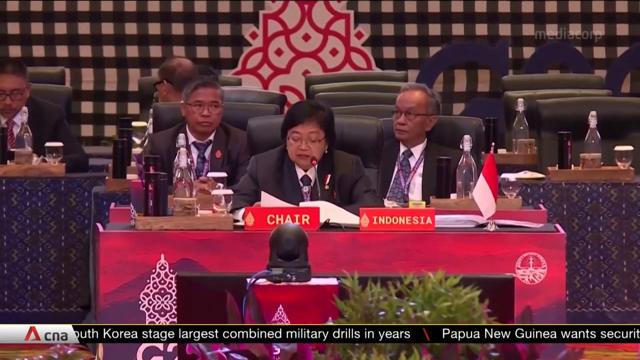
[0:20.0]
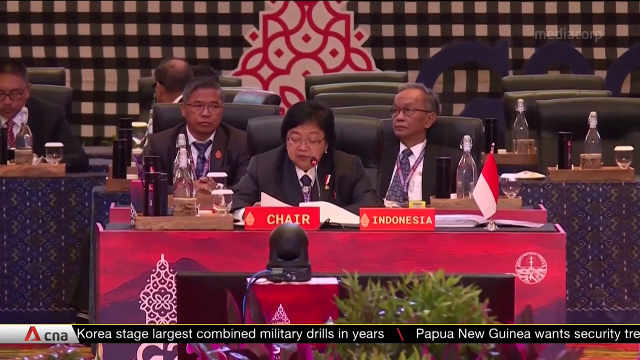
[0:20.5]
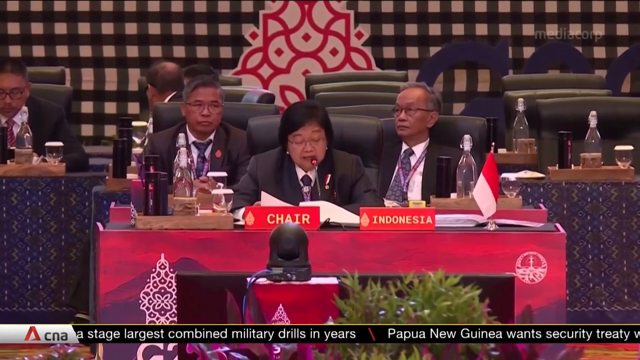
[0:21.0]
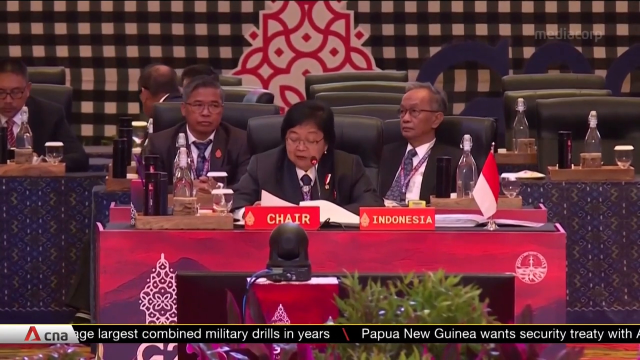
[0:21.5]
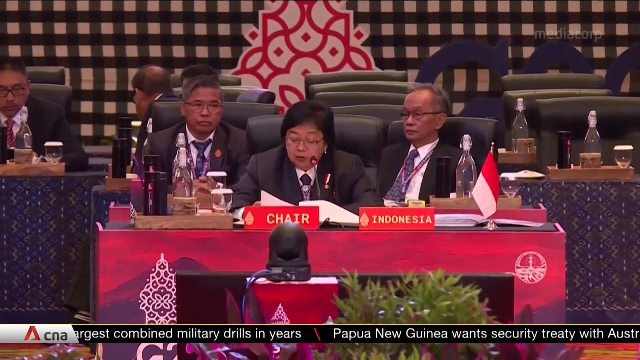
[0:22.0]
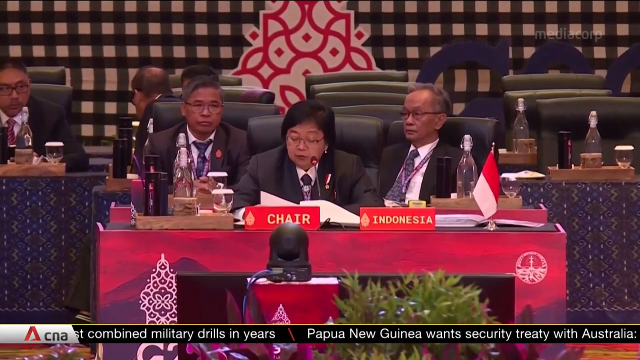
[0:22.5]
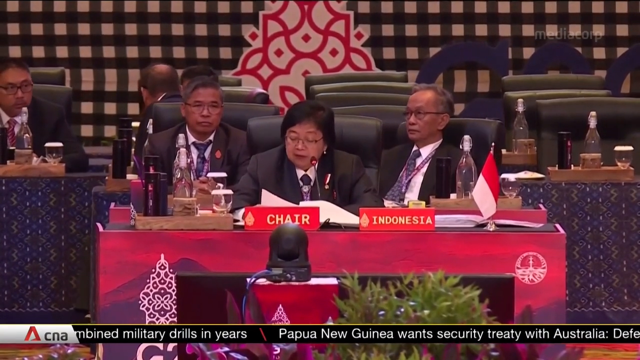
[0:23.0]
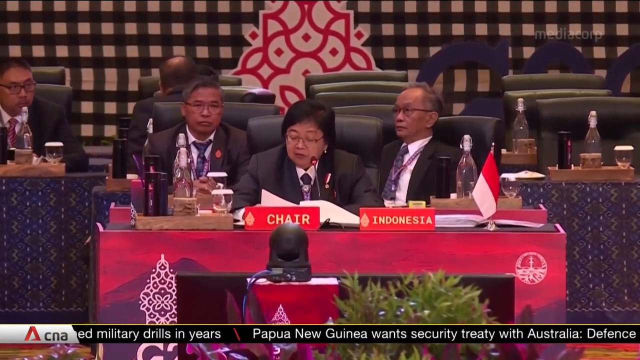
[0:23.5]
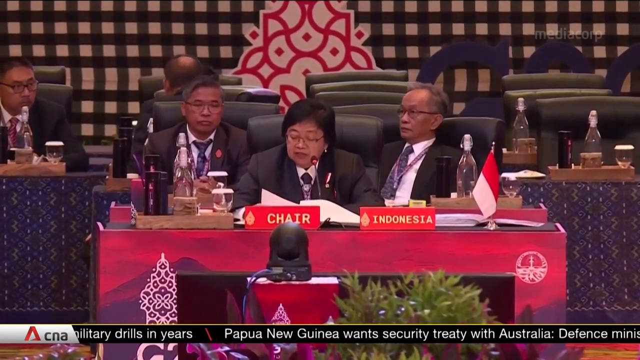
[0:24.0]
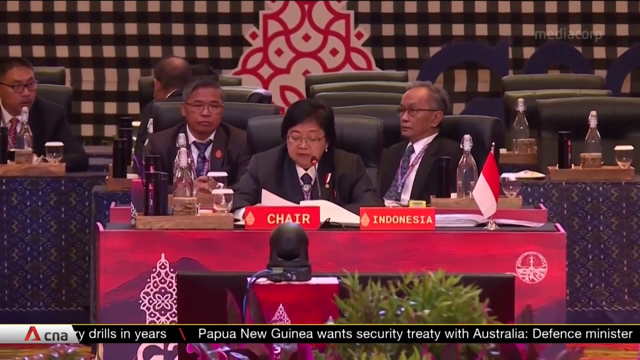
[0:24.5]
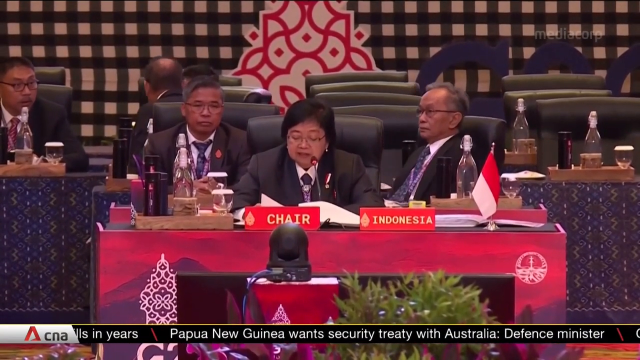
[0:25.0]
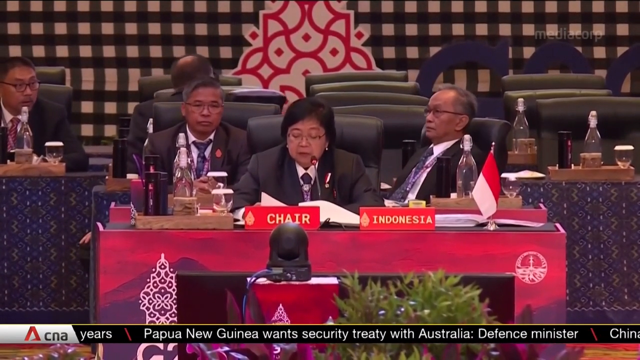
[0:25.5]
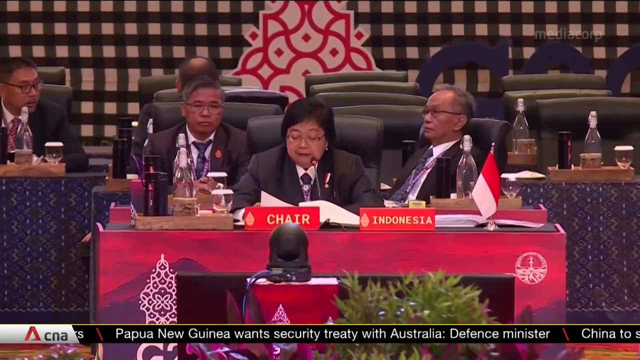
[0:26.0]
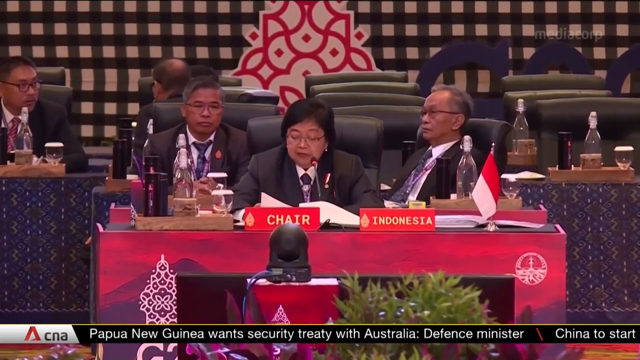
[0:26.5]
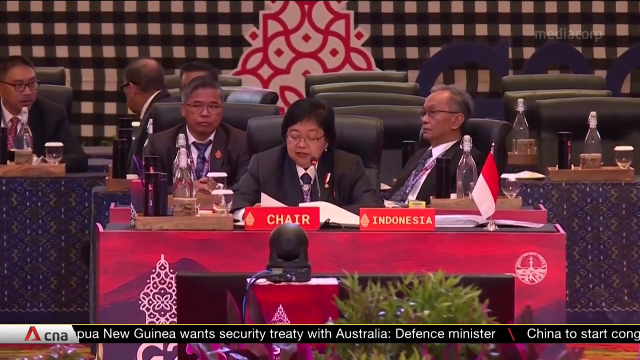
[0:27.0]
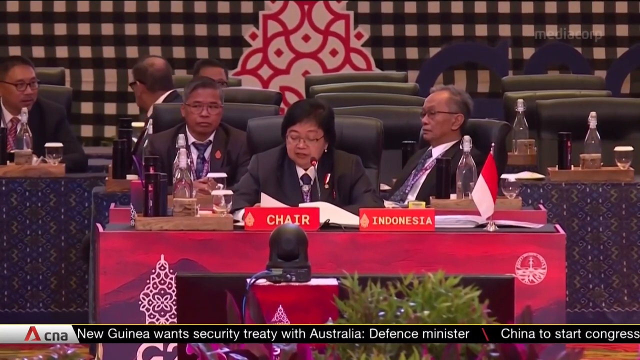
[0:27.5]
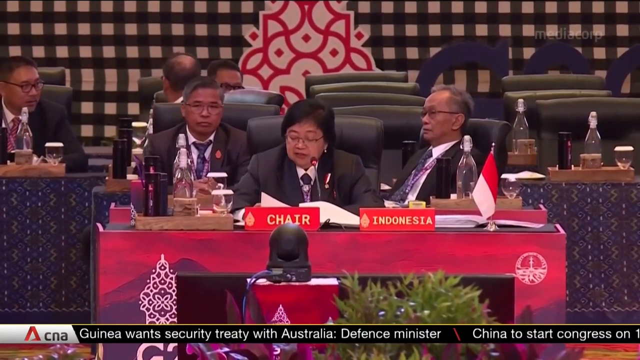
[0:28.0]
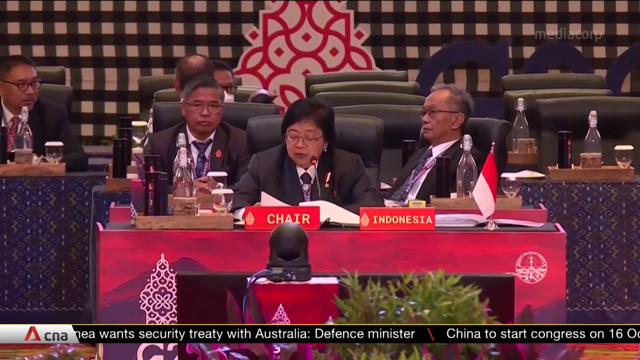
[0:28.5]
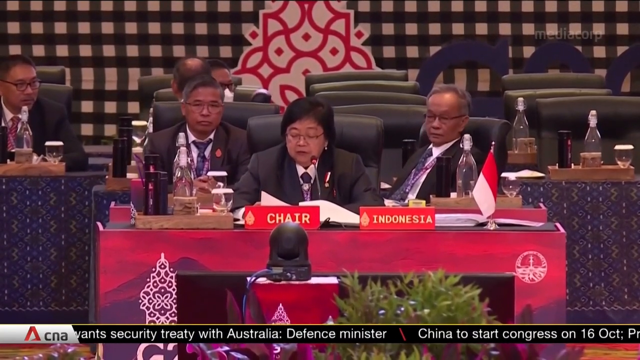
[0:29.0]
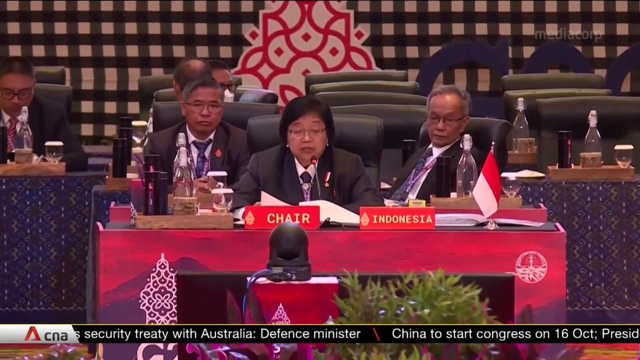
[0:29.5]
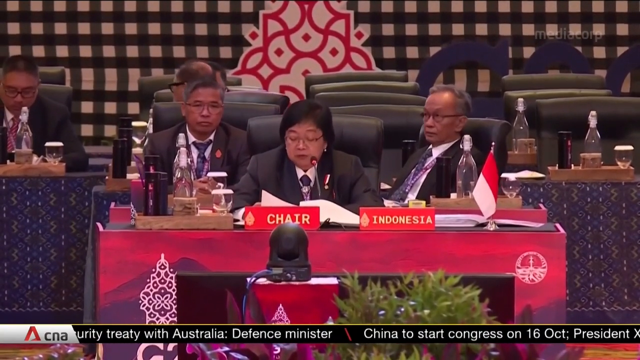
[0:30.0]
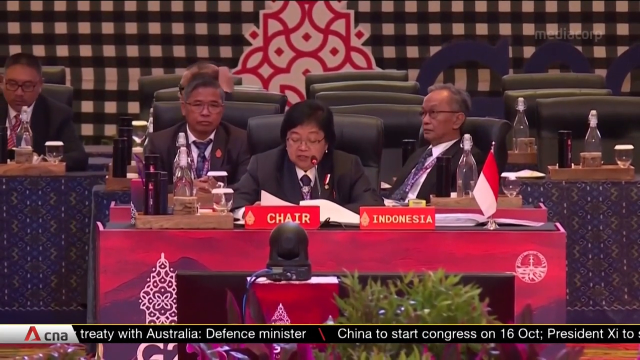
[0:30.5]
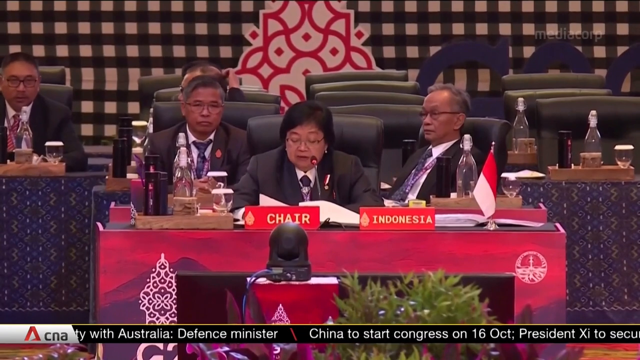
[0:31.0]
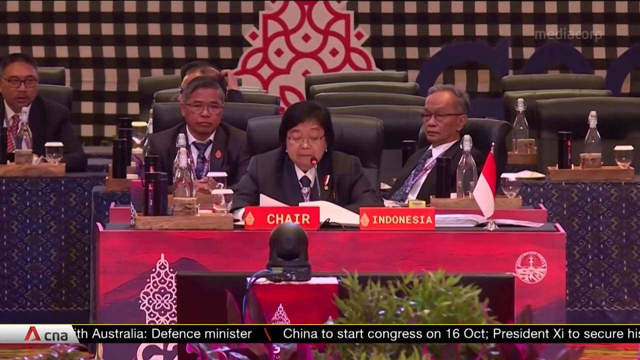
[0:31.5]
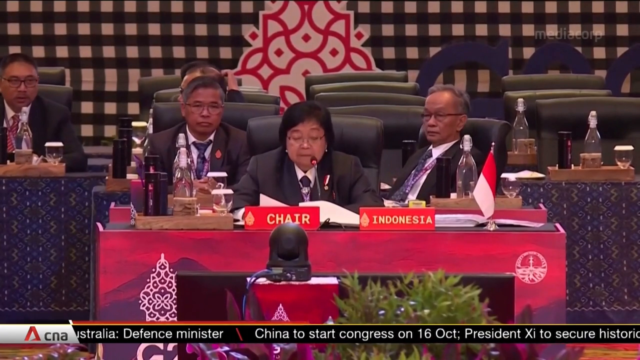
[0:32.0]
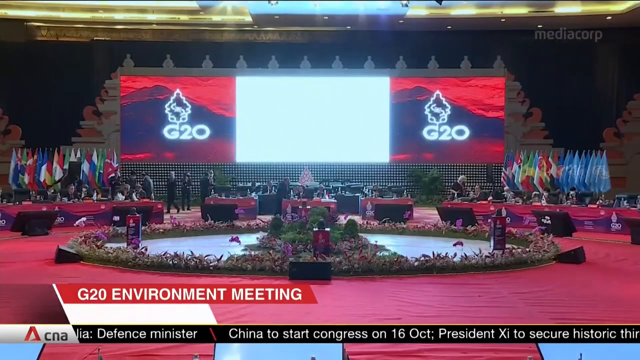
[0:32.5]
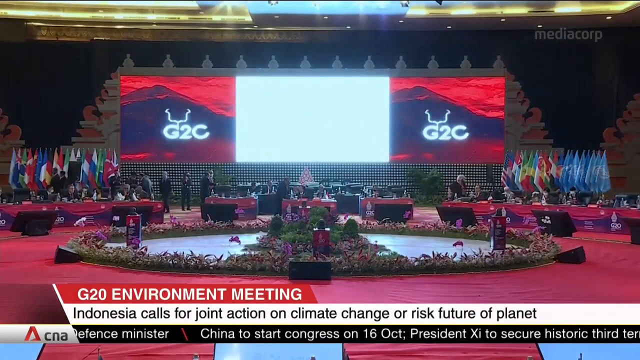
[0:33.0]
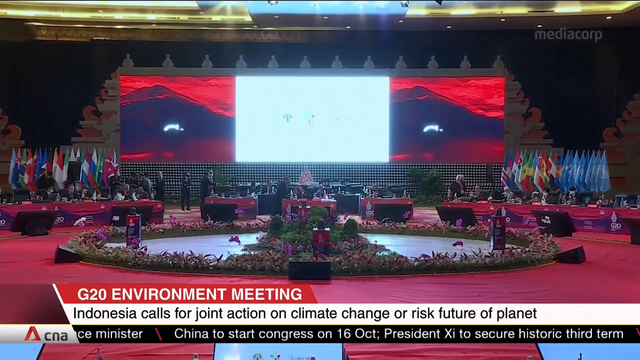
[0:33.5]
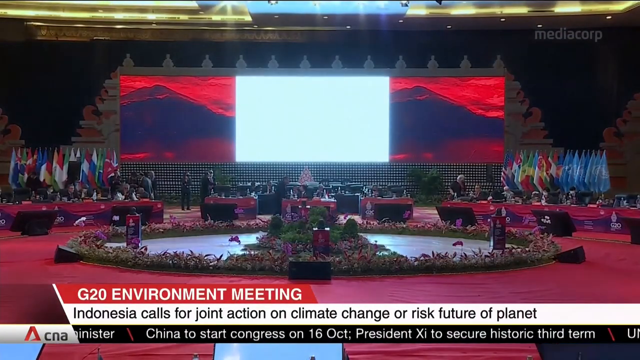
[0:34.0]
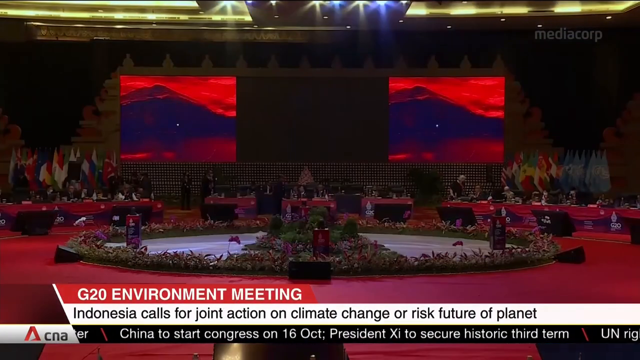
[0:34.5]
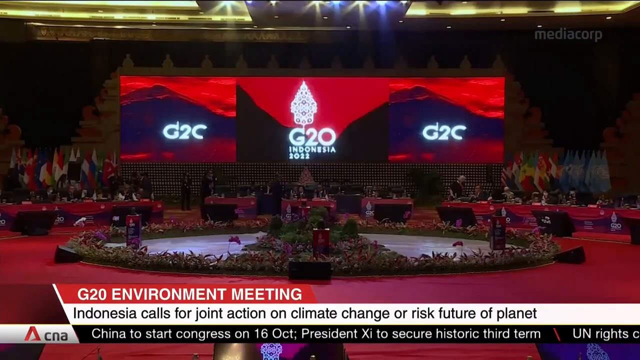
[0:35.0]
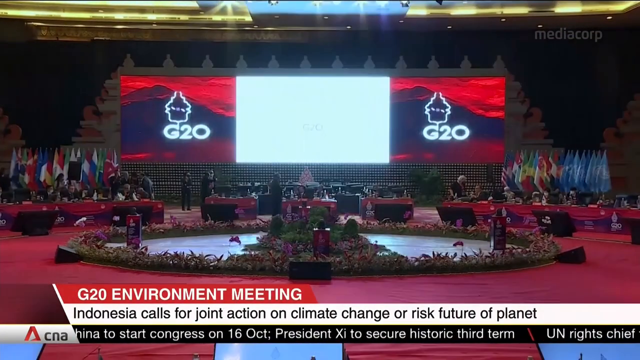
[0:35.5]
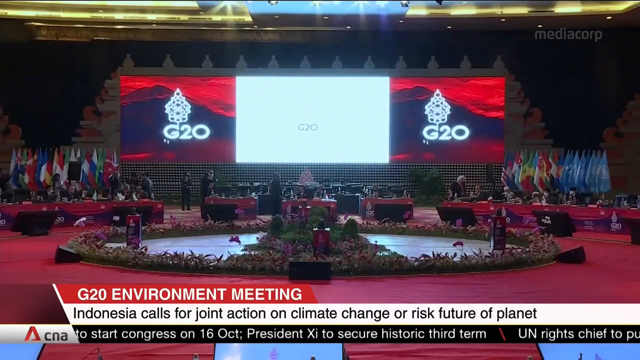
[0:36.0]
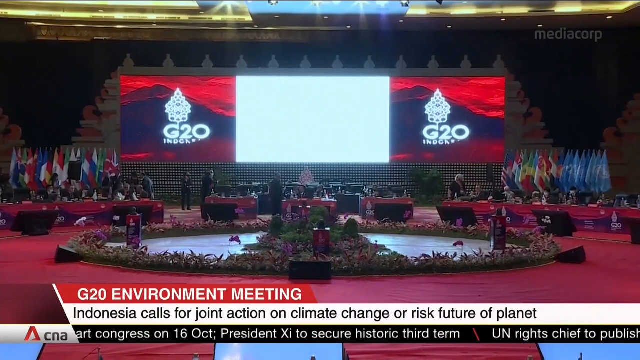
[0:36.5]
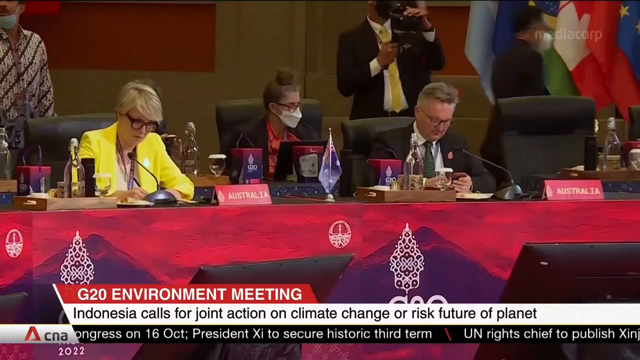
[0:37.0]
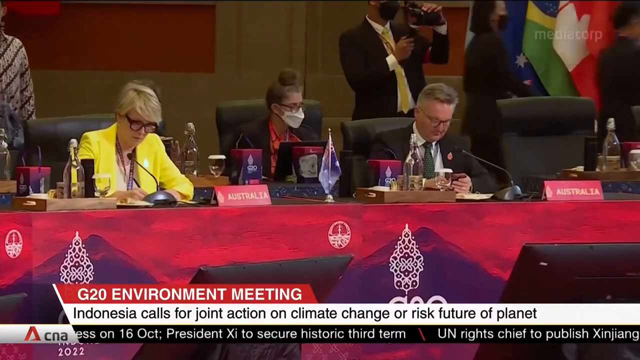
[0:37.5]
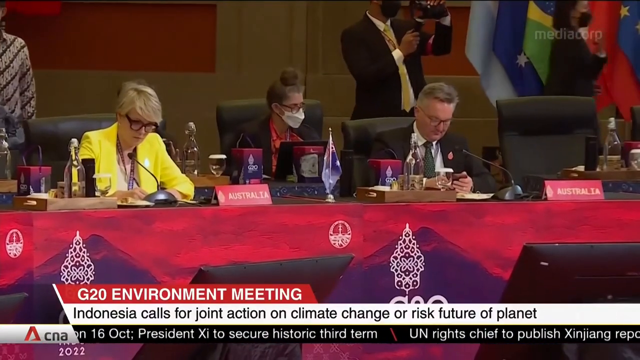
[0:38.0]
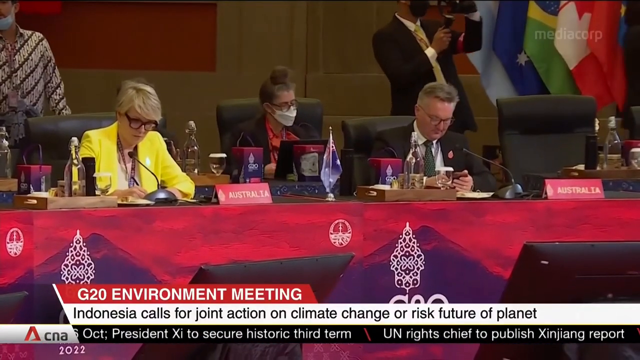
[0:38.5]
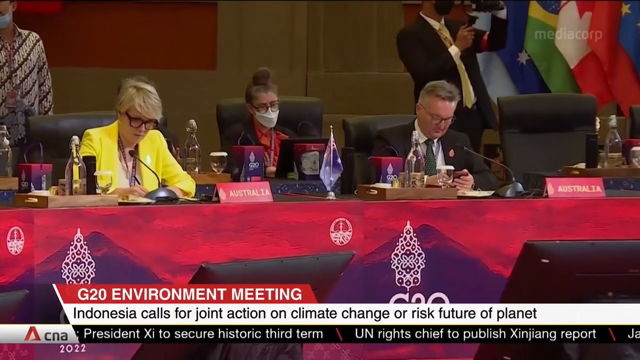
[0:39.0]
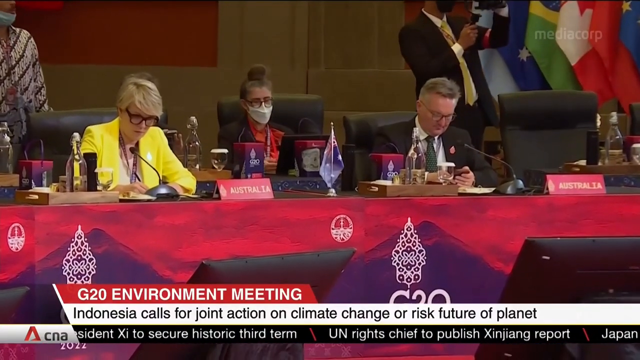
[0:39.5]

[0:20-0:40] The center representative has short black hair and wears glasses, and appears to be a woman wearing small earrings. The other two also wear glasses and have short gray hair; all three wear black suits. The video then cuts to the central area of the G20 meeting, where a large screen is on the back wall with the G20 logo on either side, along with the flags of many nations hung from poles on the back wall. Many politicians sit in chairs that form a circle around the central pavilion area. The camera zooms in on some of them, showing representatives from Australia at the table, either looking at their phones or writing on paper. Among them are a middle-aged woman with short blonde hair in a yellow suit, who appears to be writing something down, and a middle-aged to older Caucasian man in a black suit with a green tie, who appears to be on his phone. Between them and further back, another woman with her hair tied up in a bun appears to be sitting back and looking at some kind of screen.